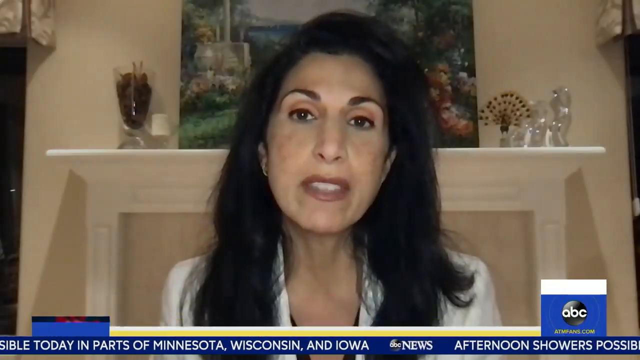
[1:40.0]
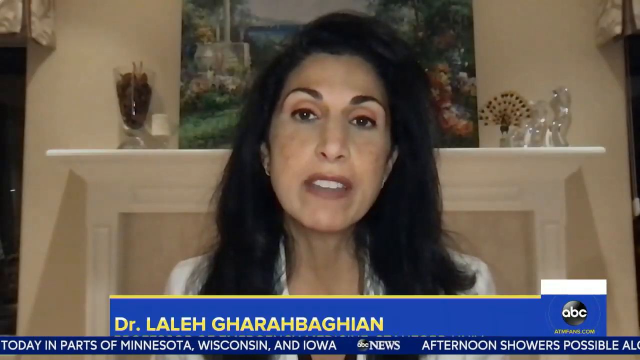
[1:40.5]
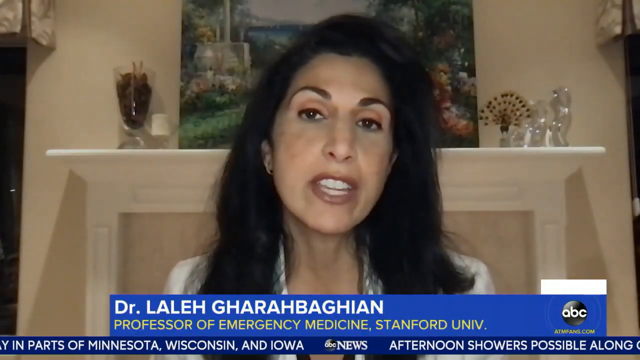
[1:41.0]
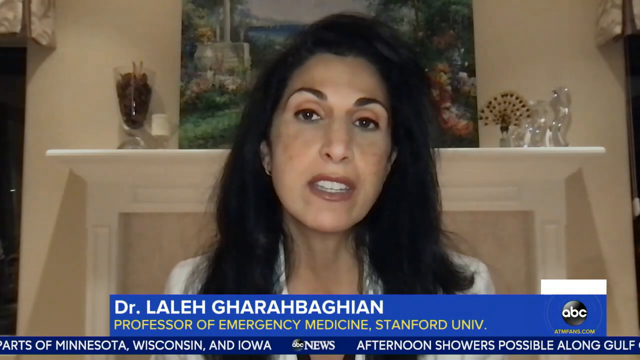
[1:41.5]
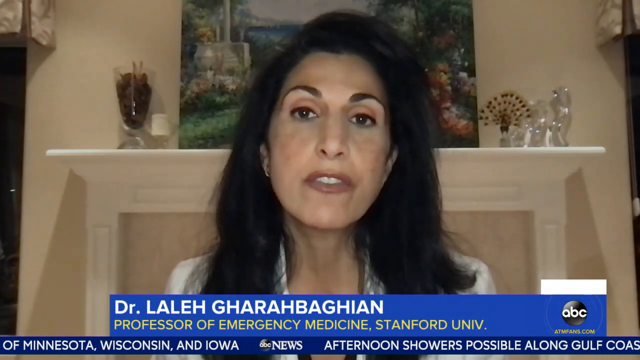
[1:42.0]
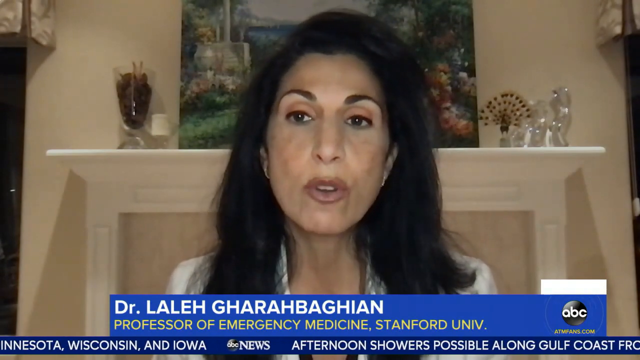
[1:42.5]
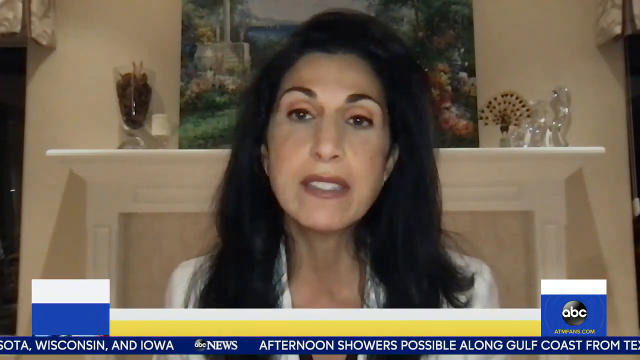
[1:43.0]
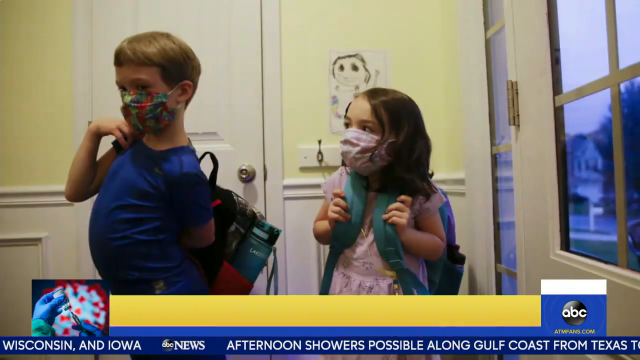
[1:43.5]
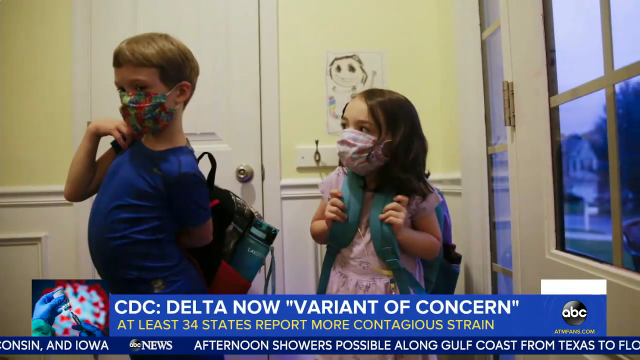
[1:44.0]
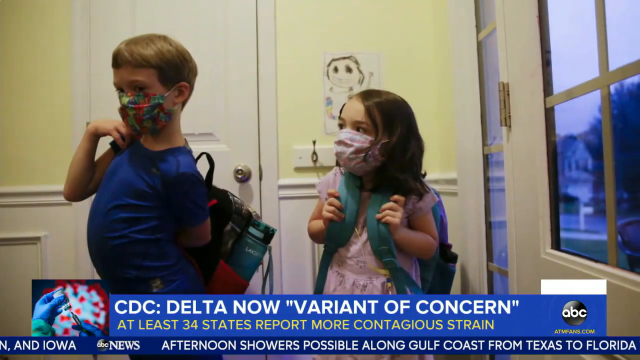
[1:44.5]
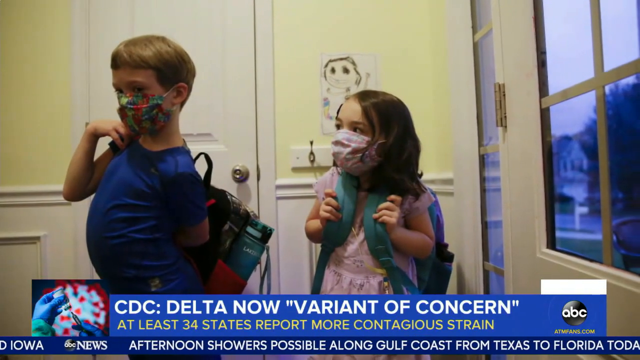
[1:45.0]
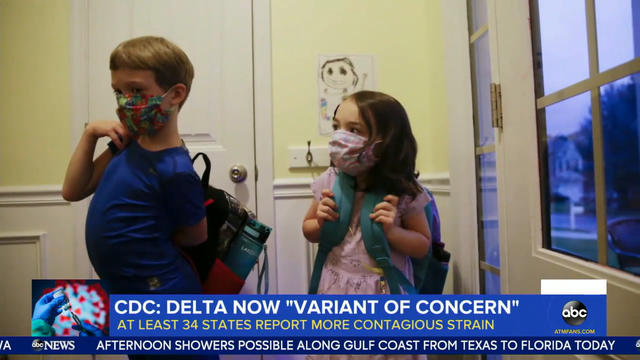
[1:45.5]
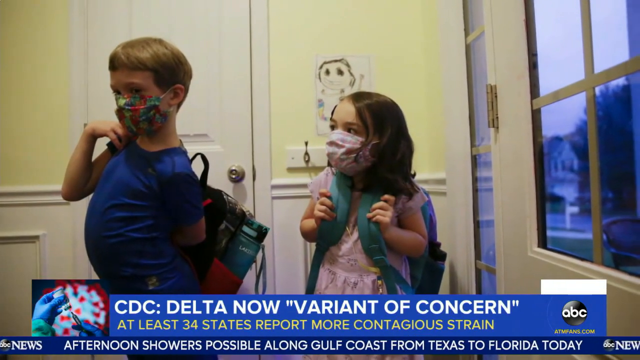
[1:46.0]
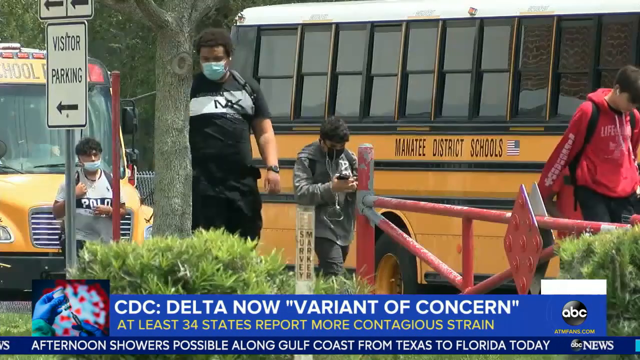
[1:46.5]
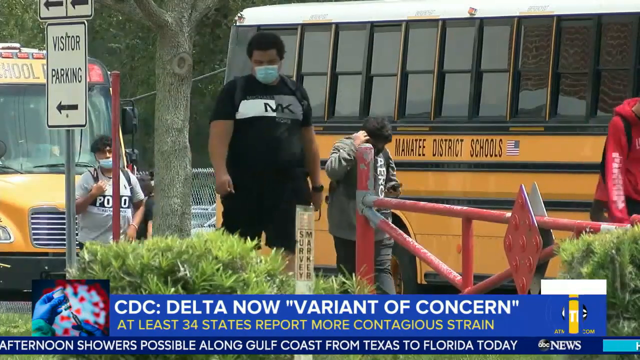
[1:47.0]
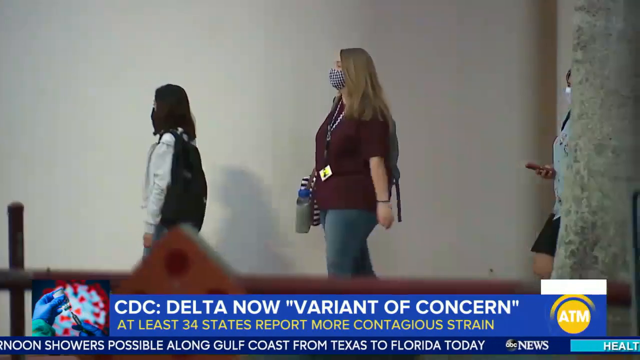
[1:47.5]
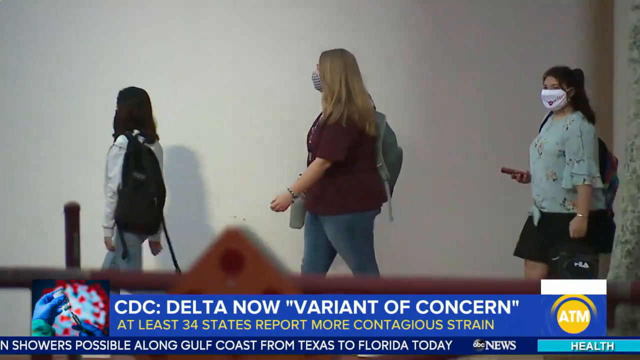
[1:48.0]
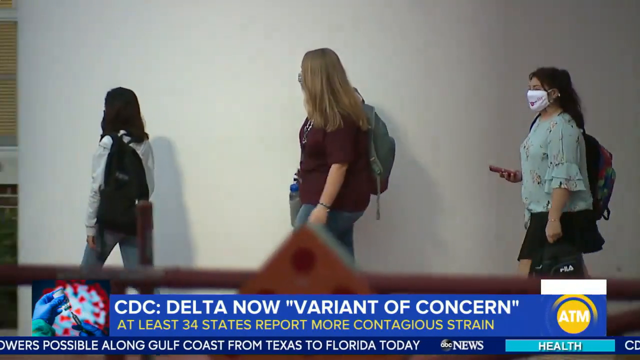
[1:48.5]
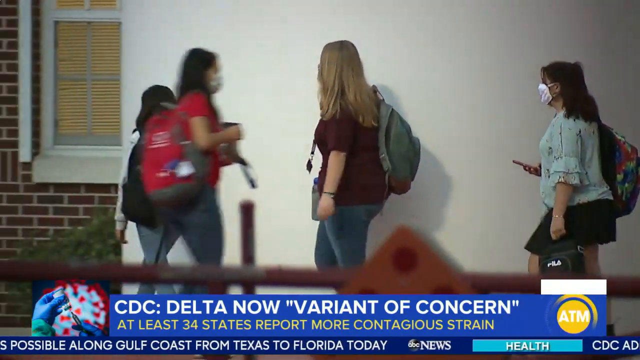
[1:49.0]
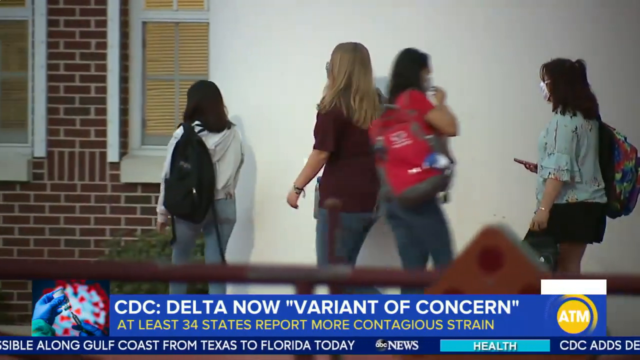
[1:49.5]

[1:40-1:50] A doctor talks to the camera; behind her is a chimney with white trim and a painting on top of it. She wears a white blouse and has straight black hair going down past her shoulders. As she continues talking, the video cuts to a scene of two kids, one of whom is putting on a backpack. Both wear masks: one pink, the other with a whole bunch of different colors including red and blue. The video cuts to a school bus with students wearing backpacks walking in front of it, and then to another scene of students walking in front of a building that looks like a school. Text at the bottom of the screen reads "CDC Delta now variant of concern."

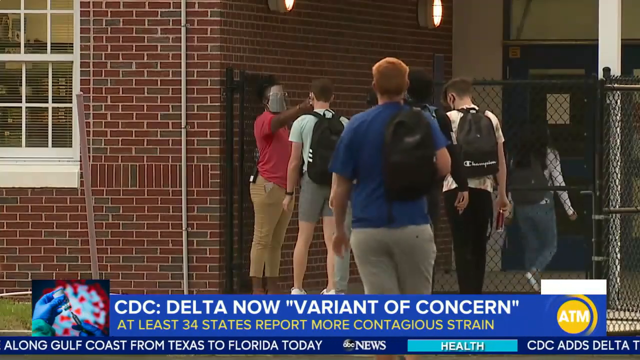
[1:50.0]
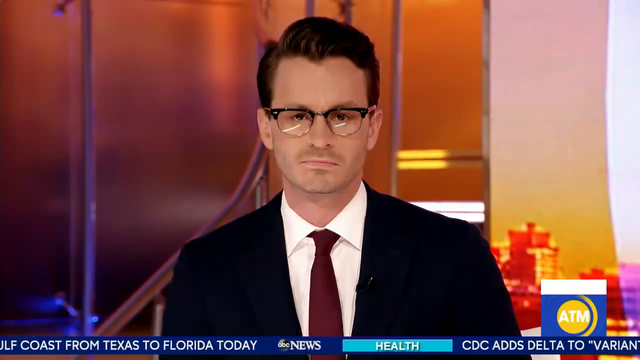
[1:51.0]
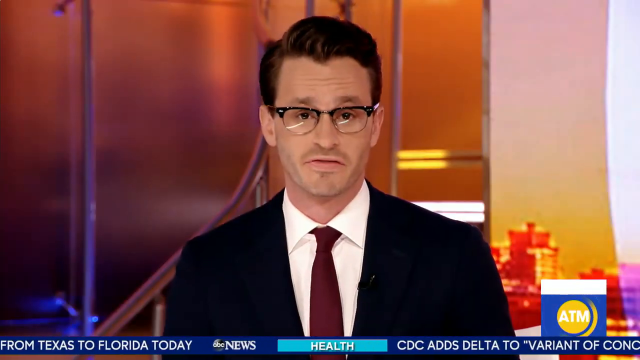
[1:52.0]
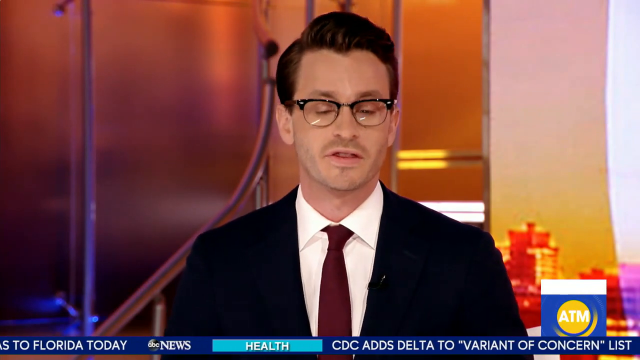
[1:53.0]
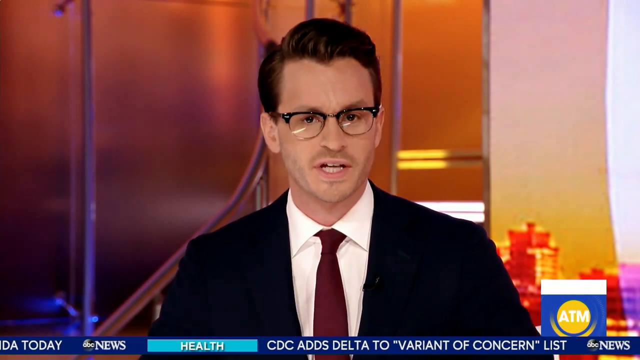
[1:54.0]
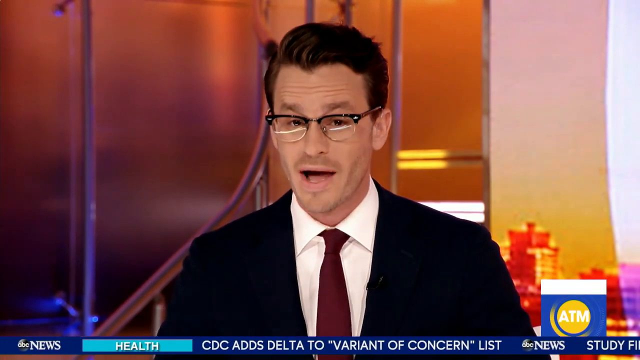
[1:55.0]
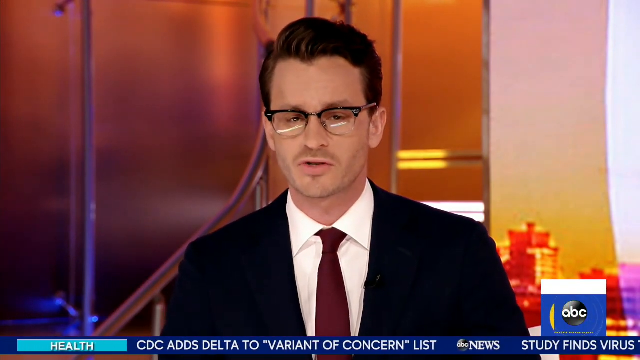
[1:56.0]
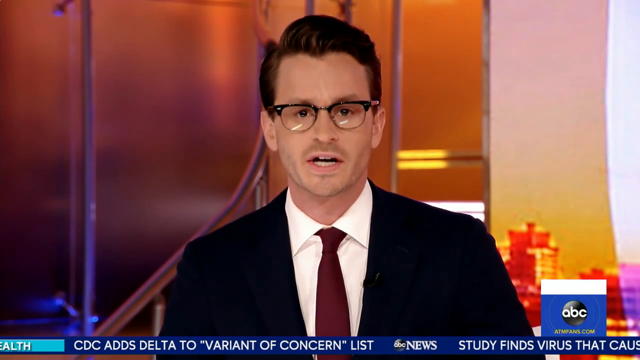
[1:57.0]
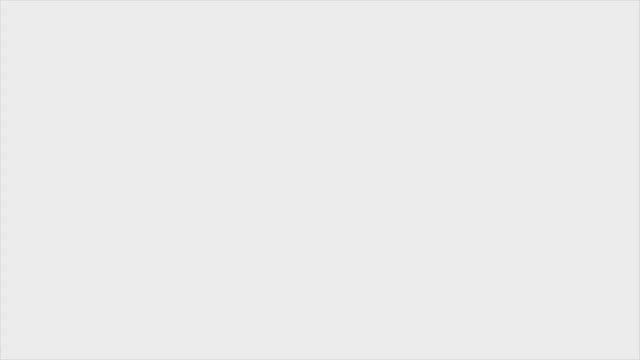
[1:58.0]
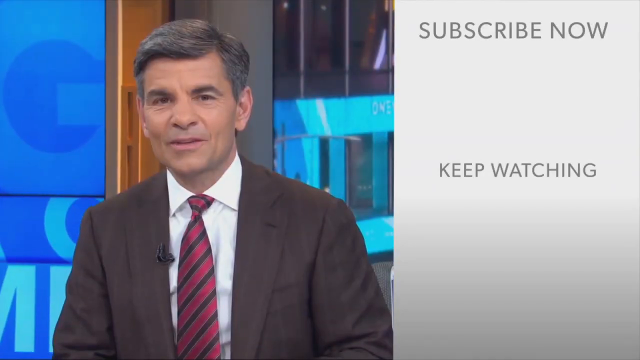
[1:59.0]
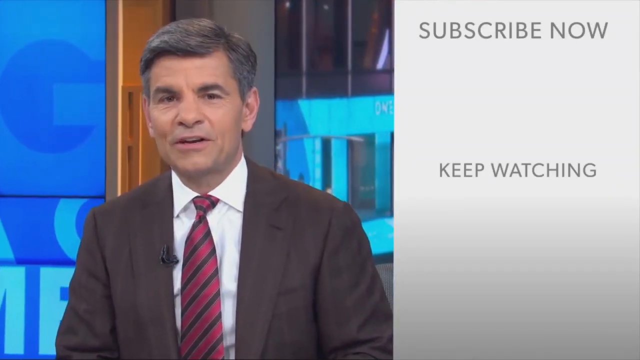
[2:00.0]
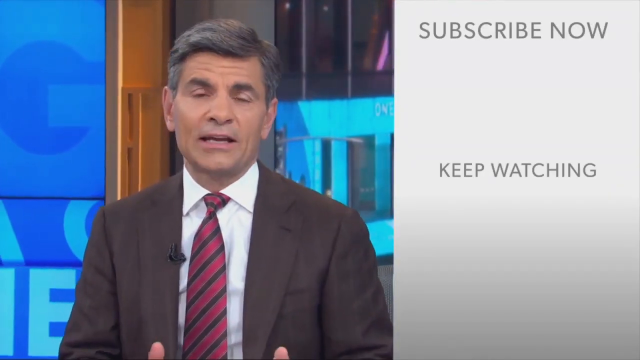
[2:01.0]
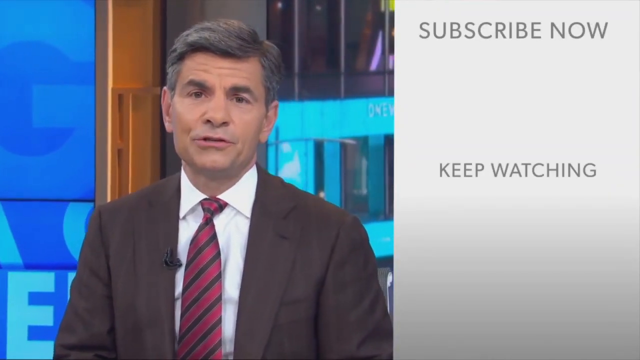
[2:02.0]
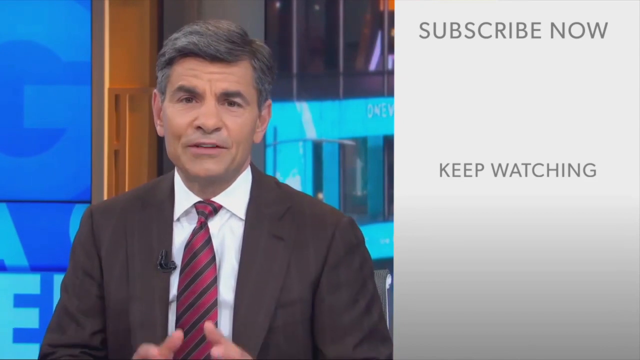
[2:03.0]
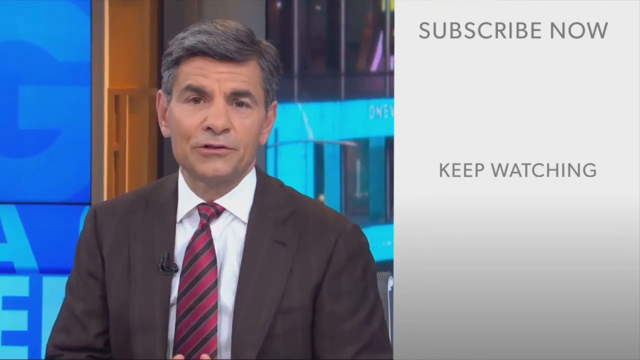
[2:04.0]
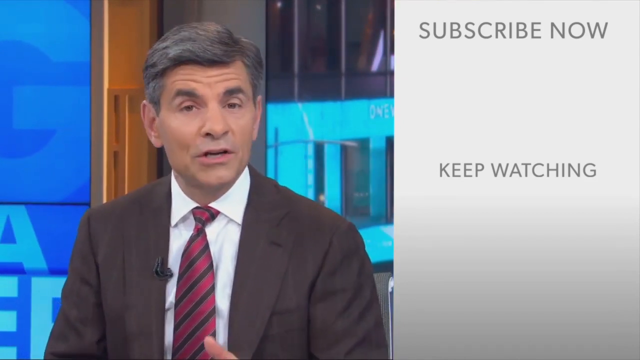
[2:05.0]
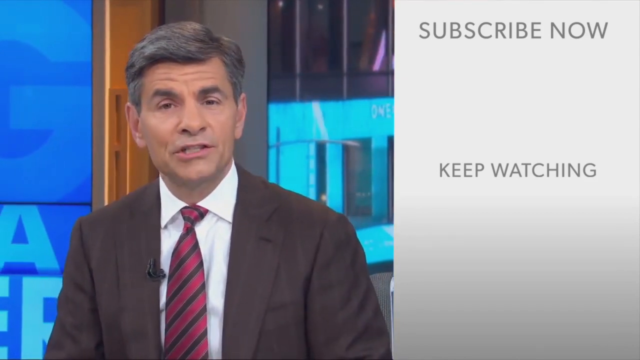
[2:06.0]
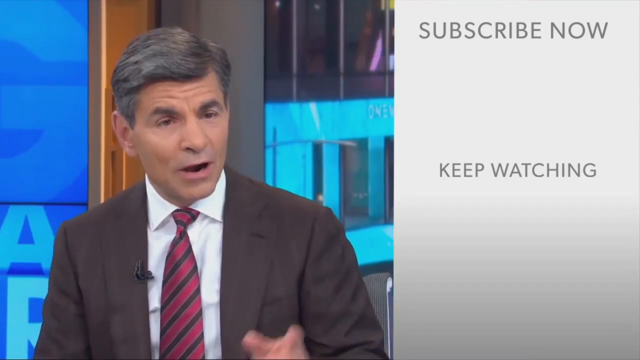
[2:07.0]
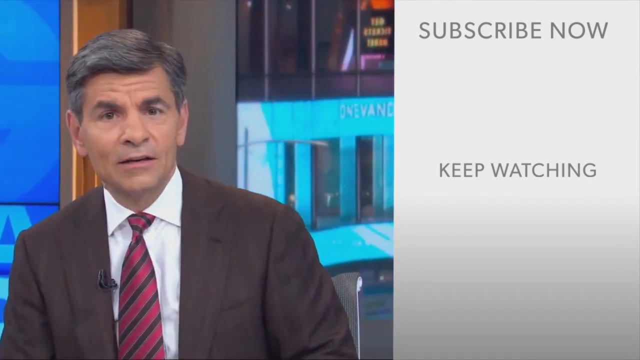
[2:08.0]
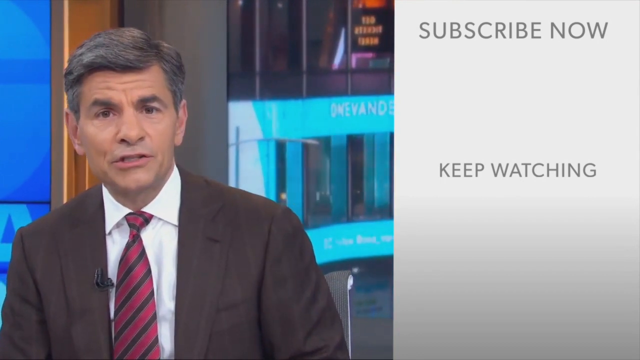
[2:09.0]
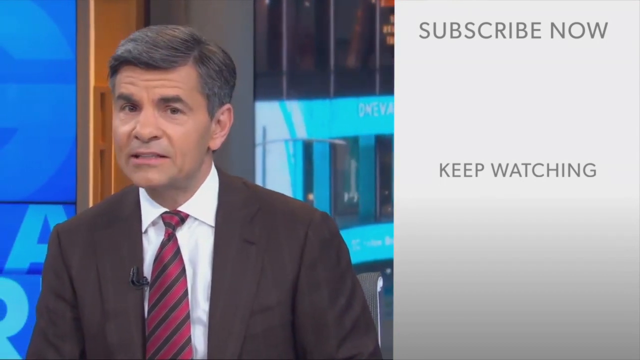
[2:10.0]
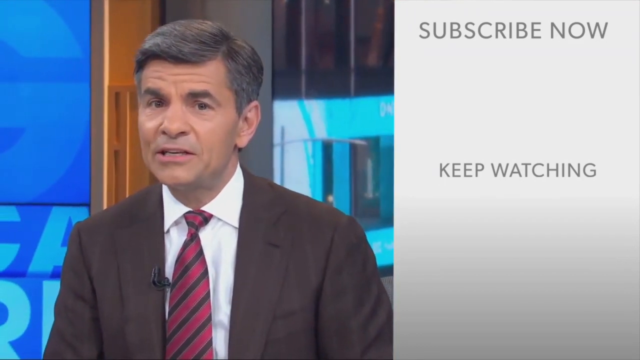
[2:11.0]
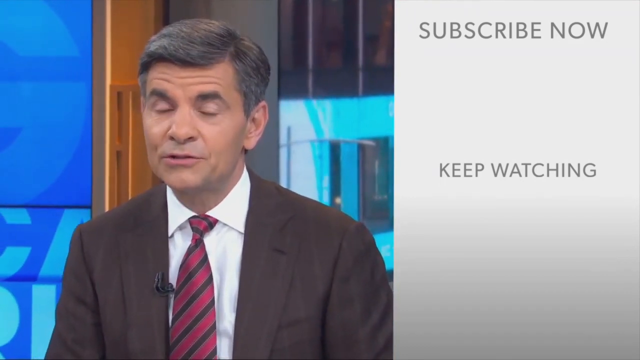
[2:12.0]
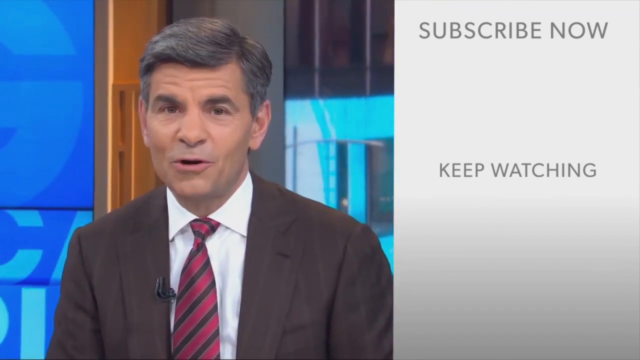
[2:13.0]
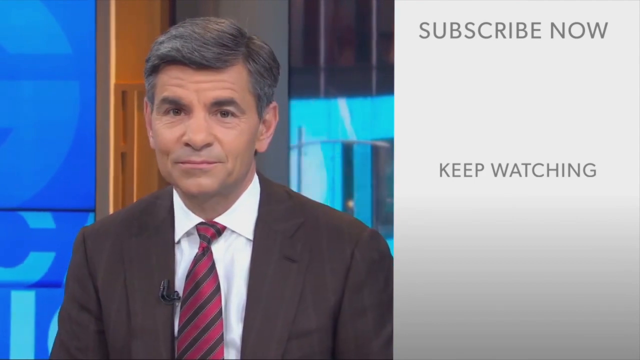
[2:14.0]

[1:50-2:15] Students with backpacks walk into a school; the building looks like it is made of burgundy bricks and has windows with white trim. A person seems to be checking their temperature with a temperature gun held in the right hand; the woman wears a red shirt and light brown pants. The video cuts to a news anchor wearing a black coat, a white dress shirt, a burgundy tie and glasses. It then cuts to another news anchor in what looks like a gray business suit with a black and red striped tie; the studio background looks brown and blue. On the right side, text appears that reads "subscribe now."